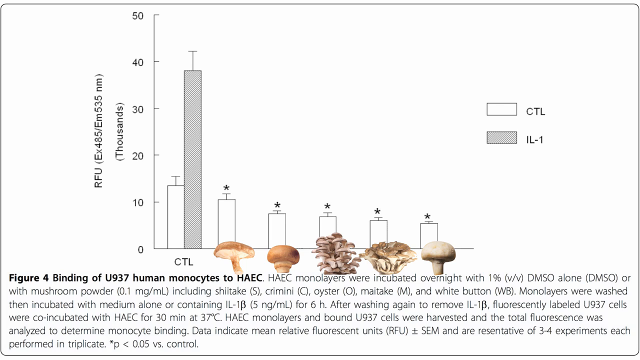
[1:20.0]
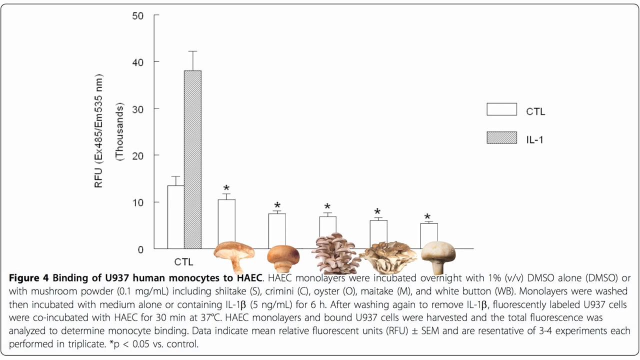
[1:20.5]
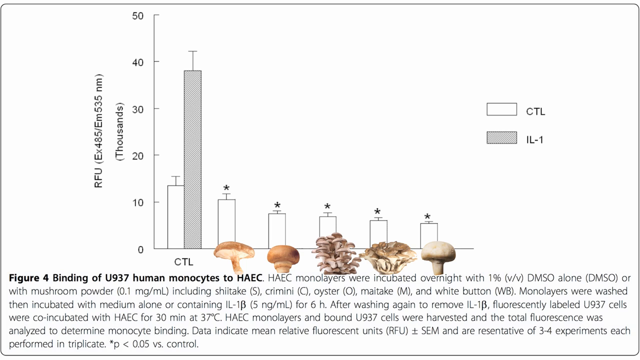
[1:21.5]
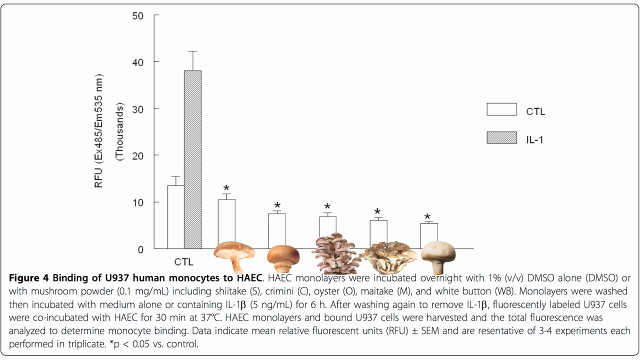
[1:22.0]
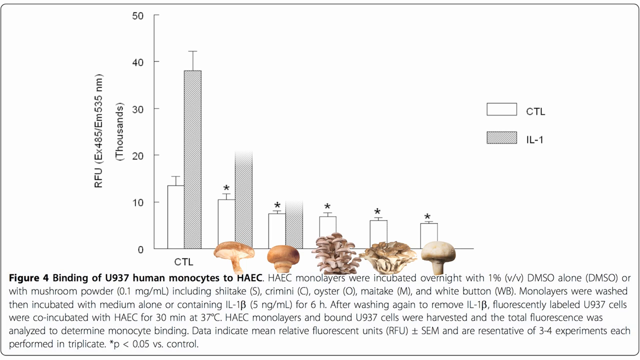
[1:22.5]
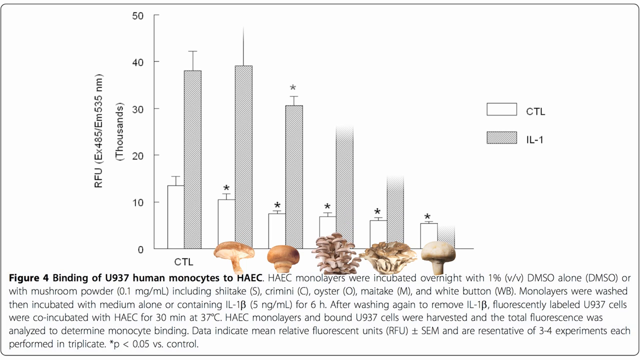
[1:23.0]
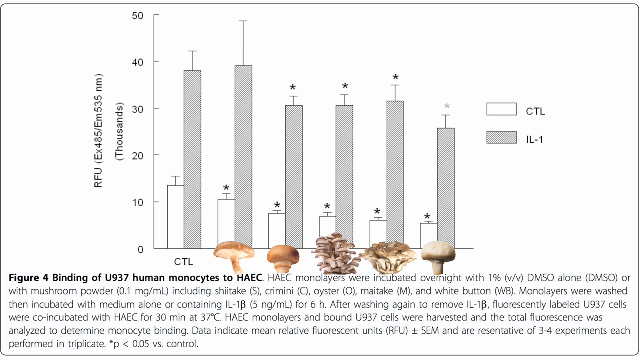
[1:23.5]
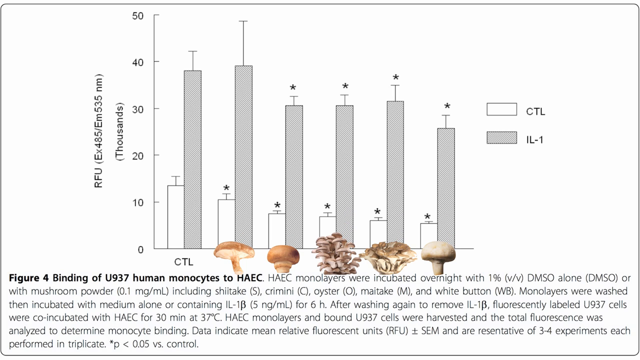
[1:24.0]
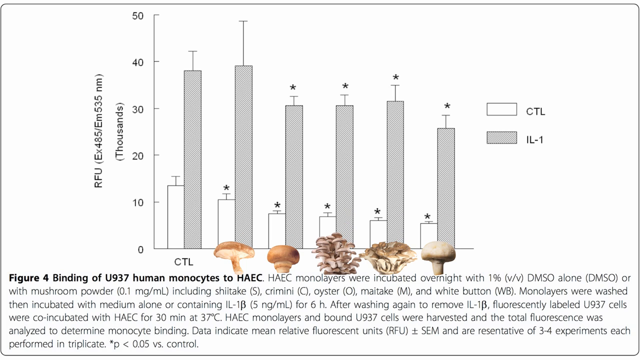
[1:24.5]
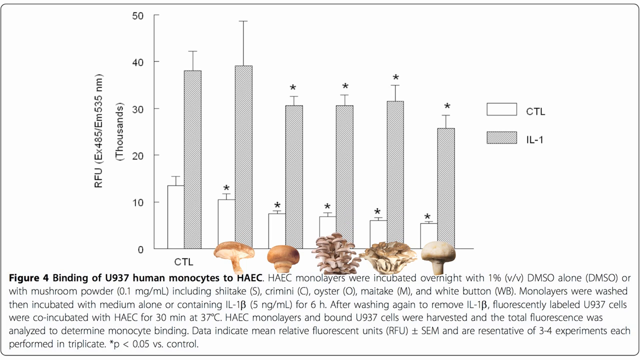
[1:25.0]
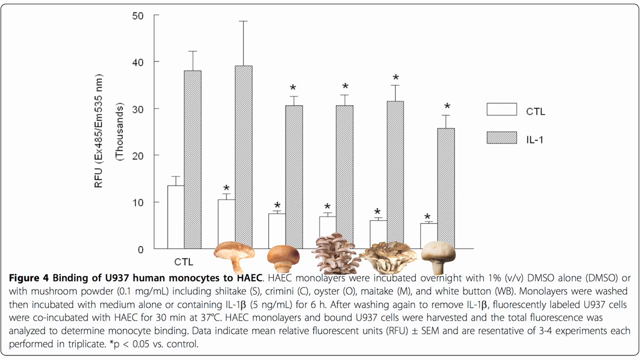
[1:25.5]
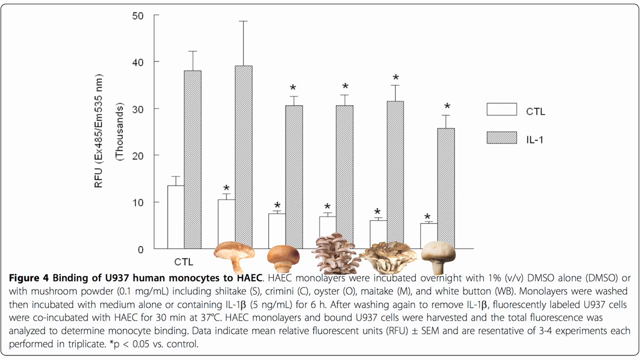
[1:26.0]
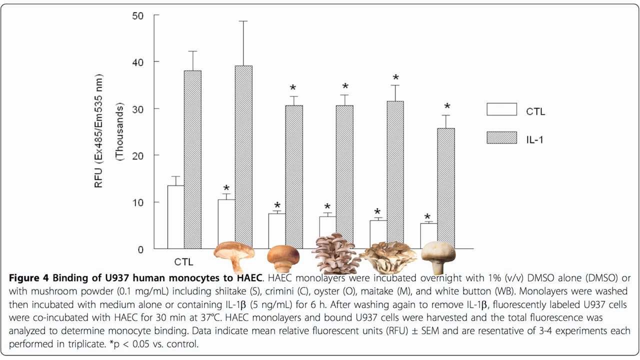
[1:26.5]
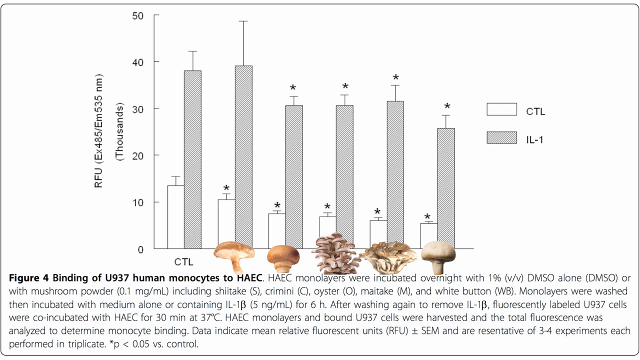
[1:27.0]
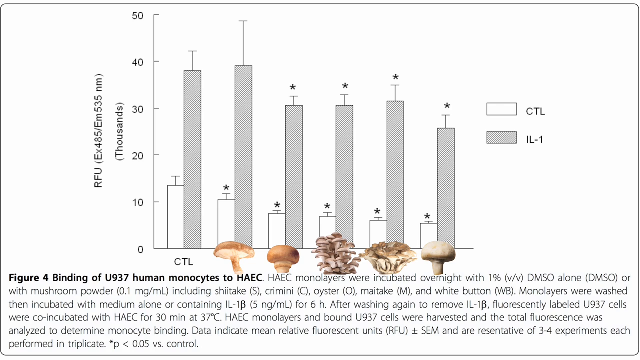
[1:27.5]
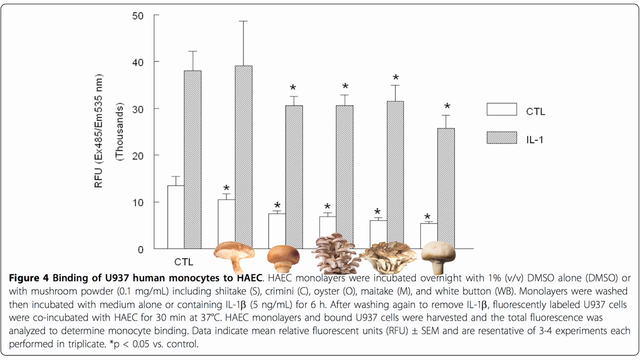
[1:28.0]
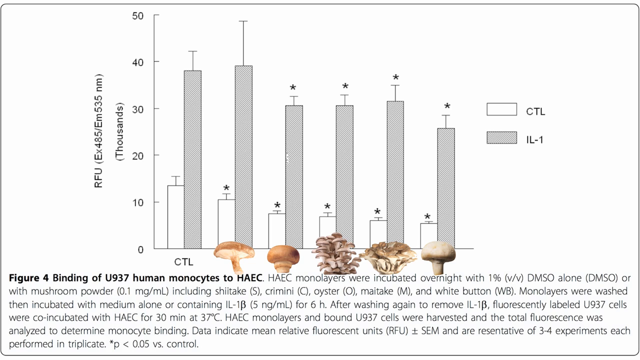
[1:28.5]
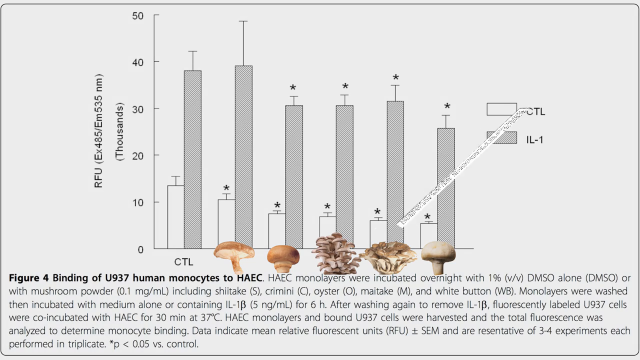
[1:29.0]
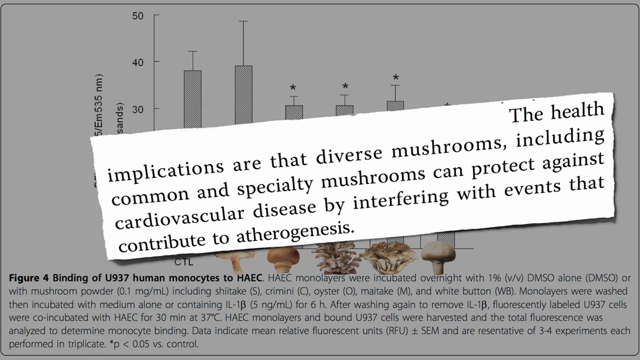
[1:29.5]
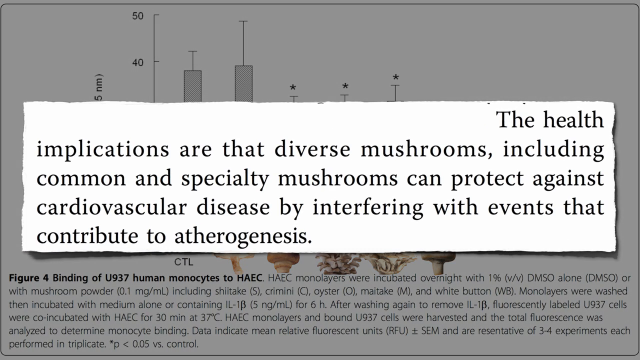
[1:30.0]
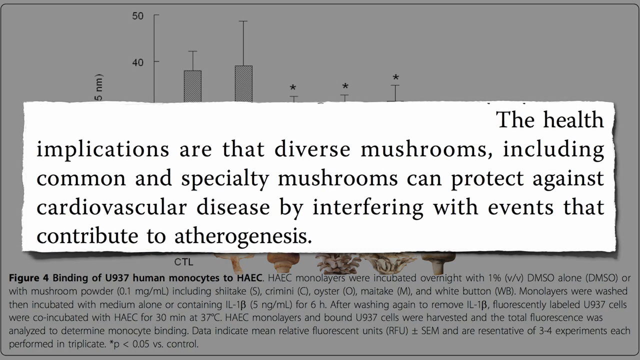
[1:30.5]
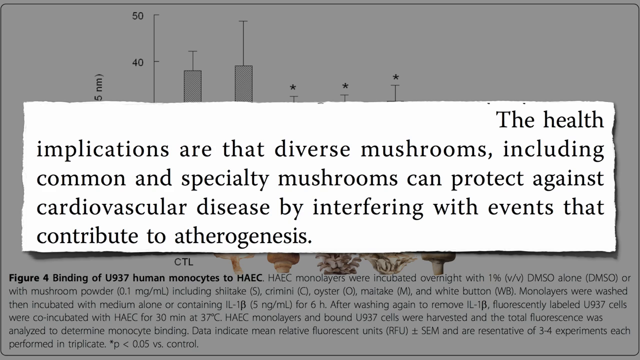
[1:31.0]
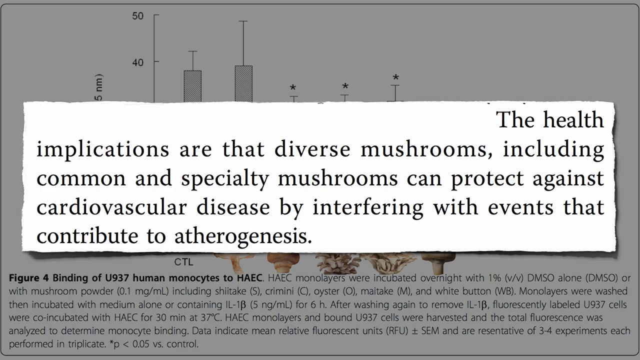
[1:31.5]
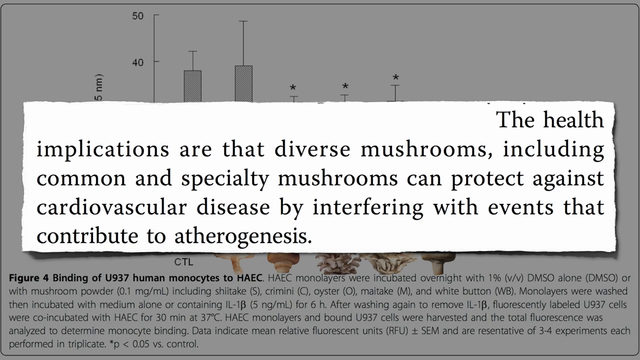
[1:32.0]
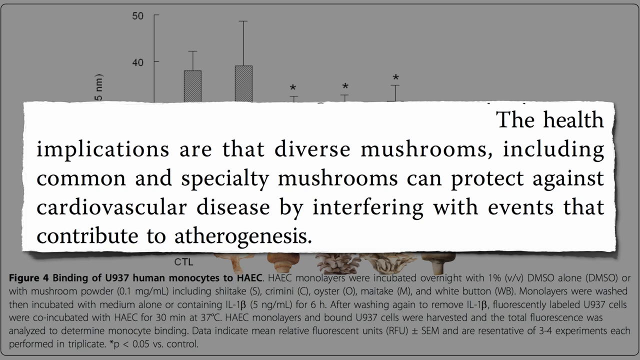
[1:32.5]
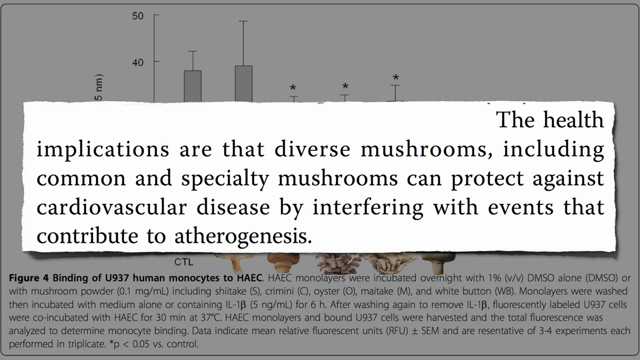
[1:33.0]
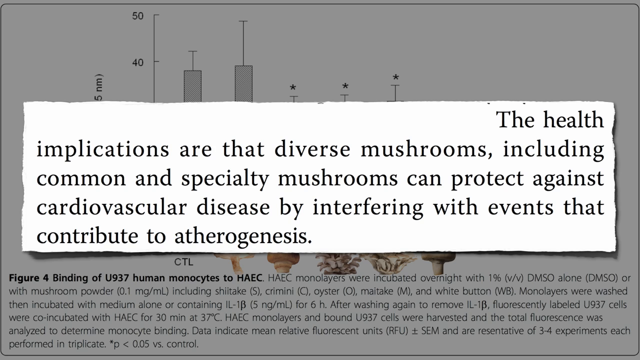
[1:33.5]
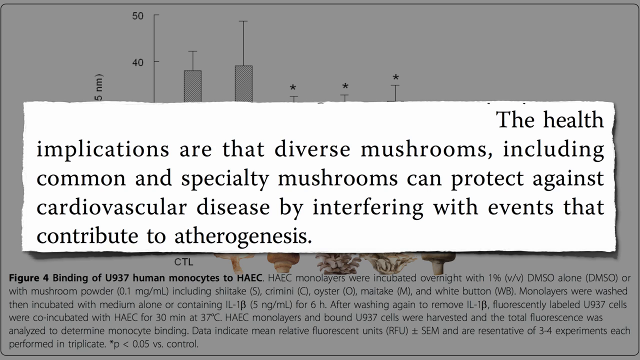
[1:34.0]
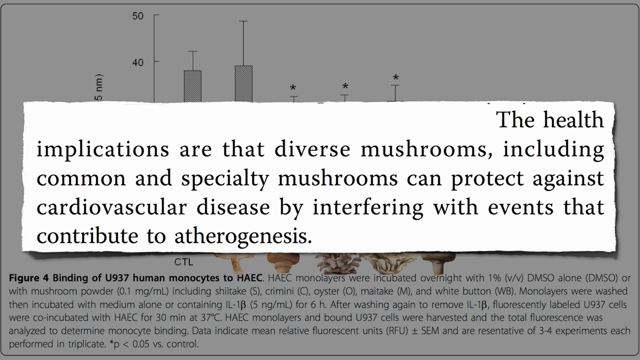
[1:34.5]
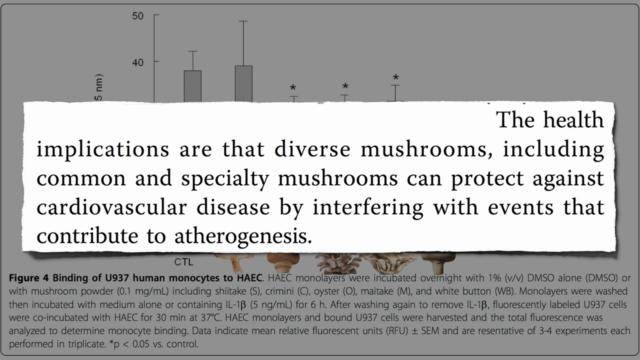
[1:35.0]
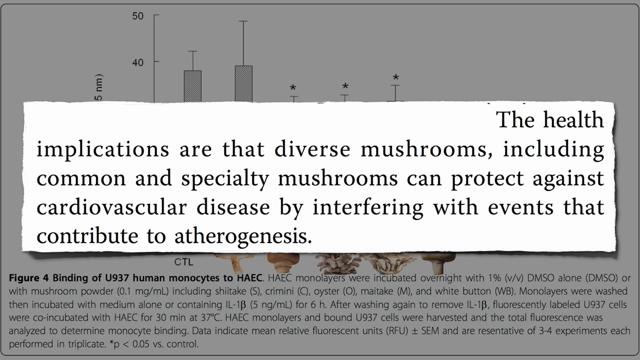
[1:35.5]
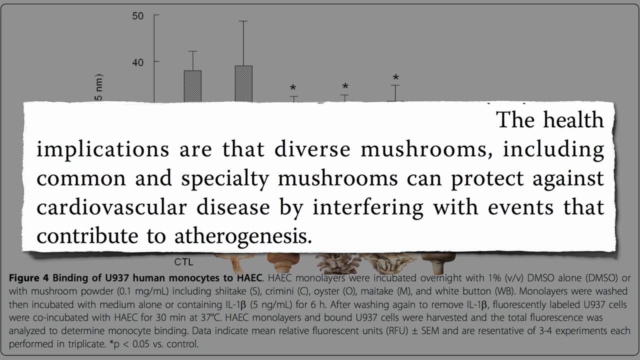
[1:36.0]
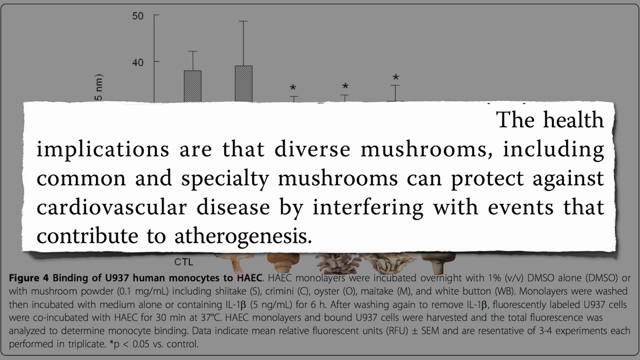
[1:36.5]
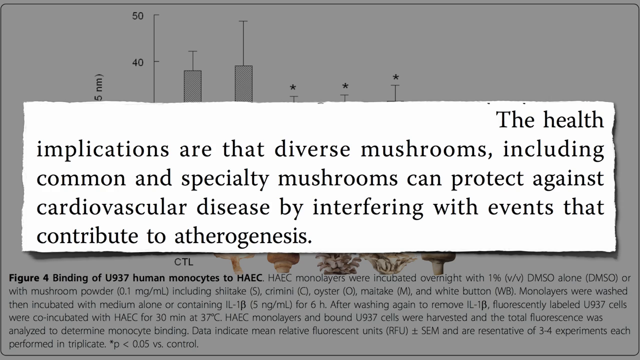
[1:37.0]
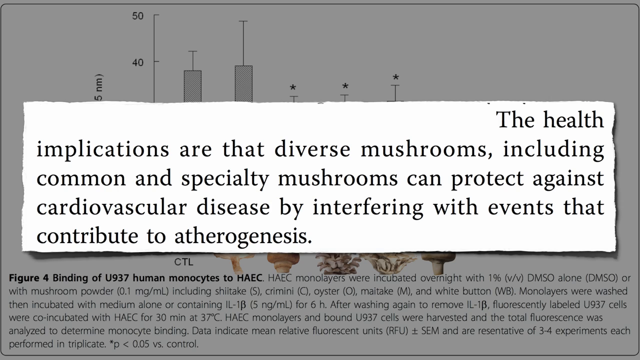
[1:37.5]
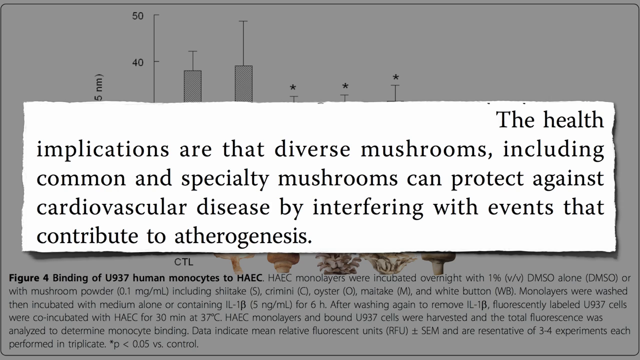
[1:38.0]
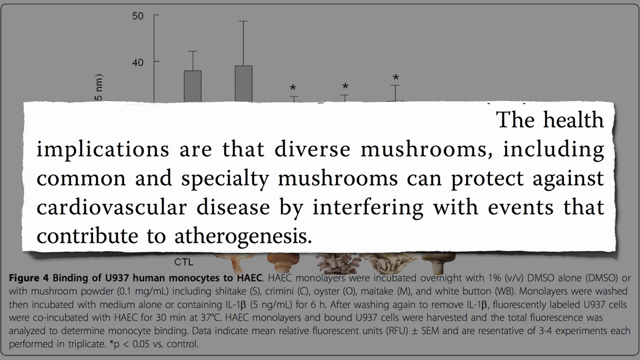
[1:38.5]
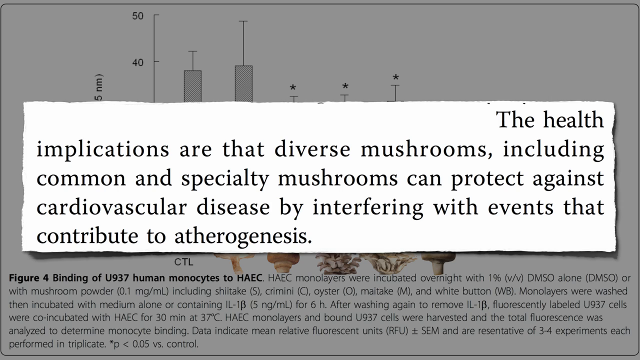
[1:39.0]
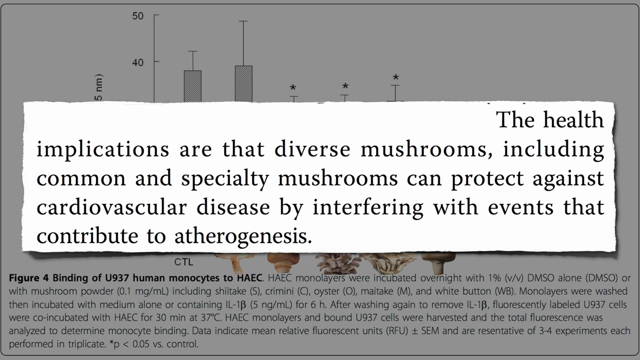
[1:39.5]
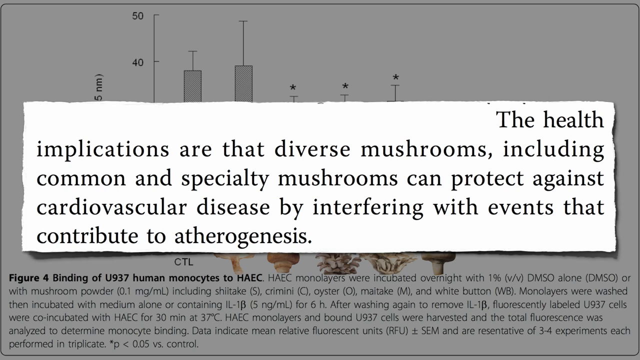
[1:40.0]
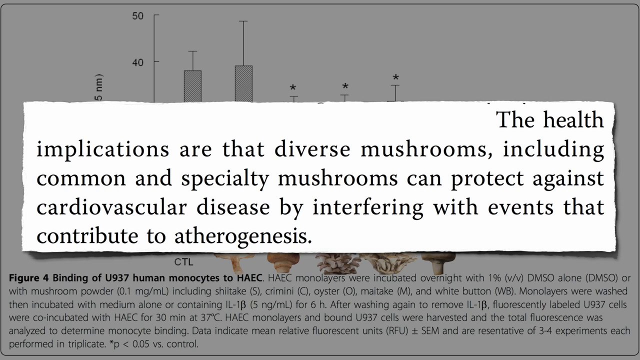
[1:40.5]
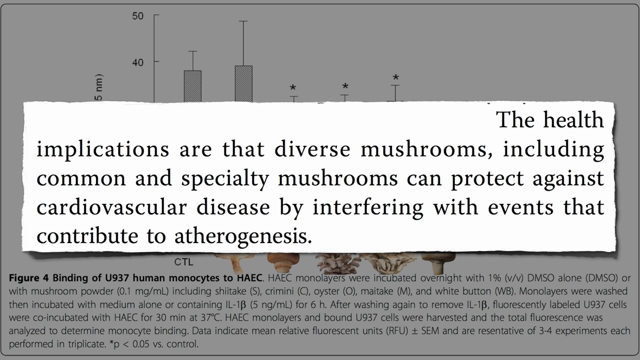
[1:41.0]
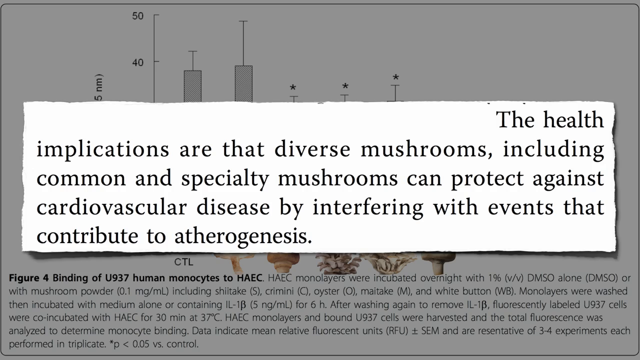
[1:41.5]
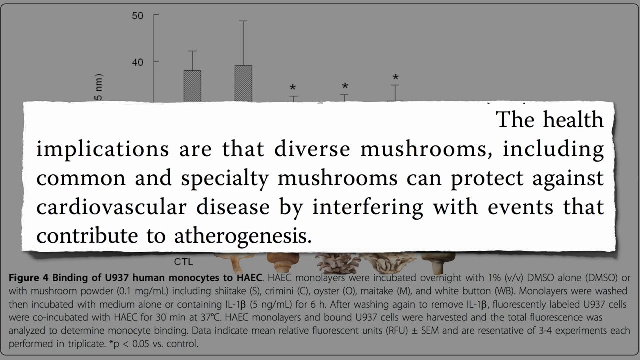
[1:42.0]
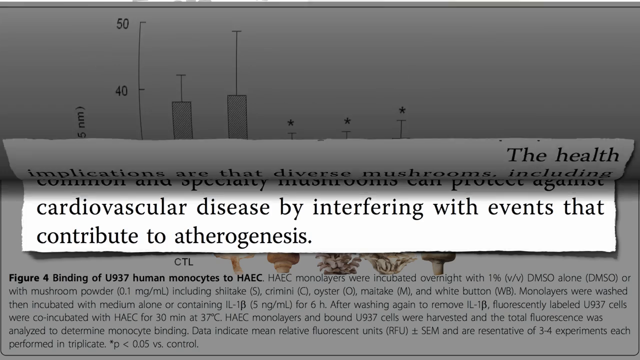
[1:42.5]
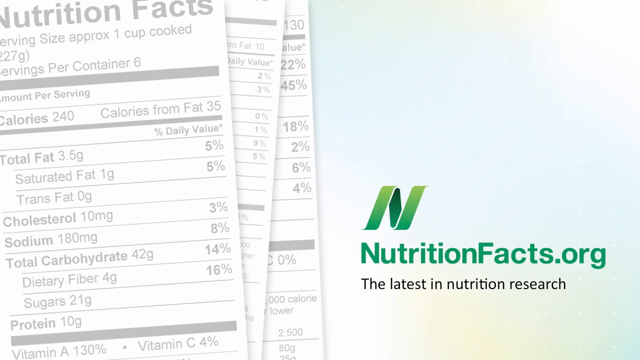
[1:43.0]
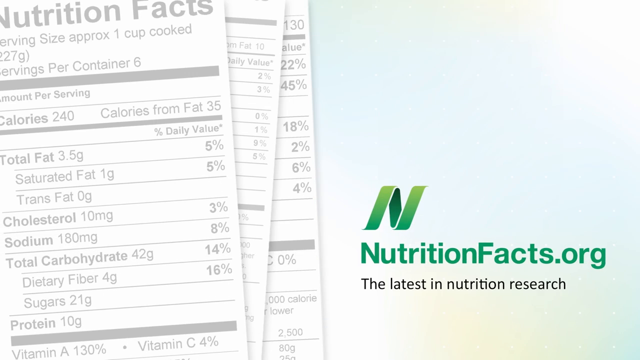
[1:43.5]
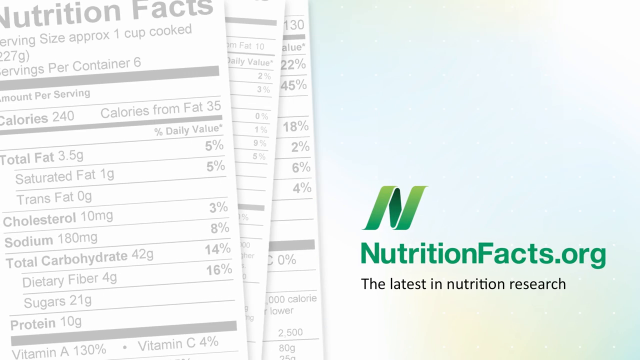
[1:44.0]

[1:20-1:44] A bar chart is on a white background. Vertically, on the left side of the chart, it says "RFU EX-485/EM-535NM, thousands", with the numbers 0, 10, 20, 30, 40 and 50 along the side. A group of five mushrooms is near the bottom of the screen, and below them black text reads "Figure 4 binding of U937 human monocytes to HAEC. HAEC monolayers were incubated overnight with 1% B/B. DMSO alone, DMSO or with mushroom powder, 0.1 milligram per milliliter, including shiitake, cremini, oyster, maitake, and white button". The bar chart changes a little, with some bars going up. Bold white text then appears above the chart: "the health implications are that diverse mushrooms, including common and specialty mushrooms, can protect against cardiovascular disease by interfering with events that contribute to atherogenesis".